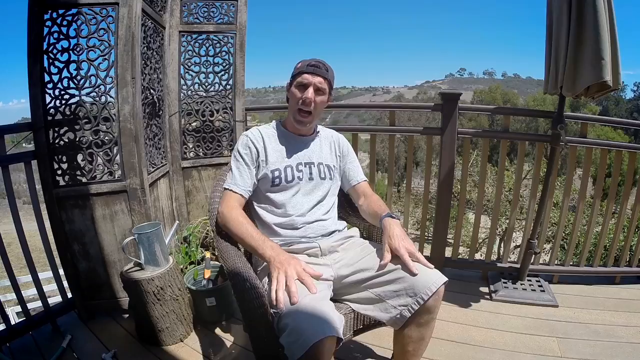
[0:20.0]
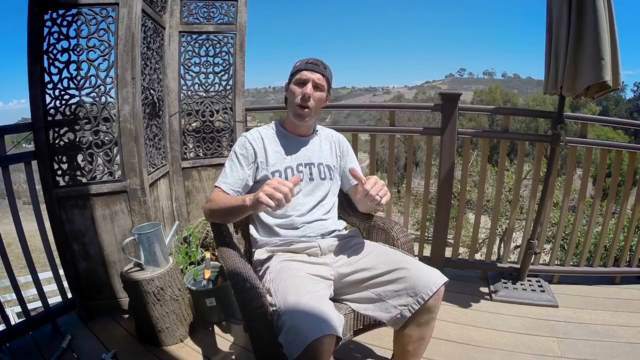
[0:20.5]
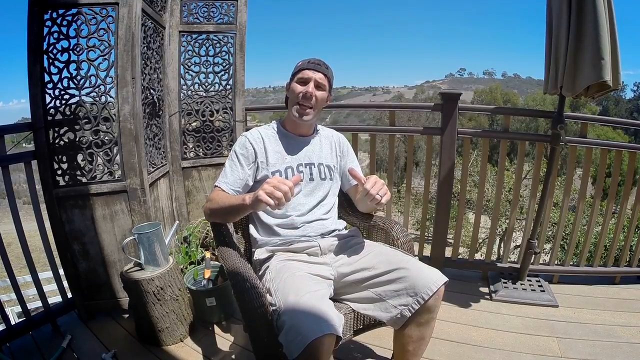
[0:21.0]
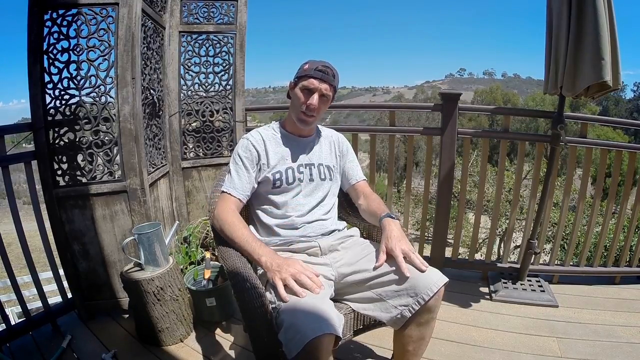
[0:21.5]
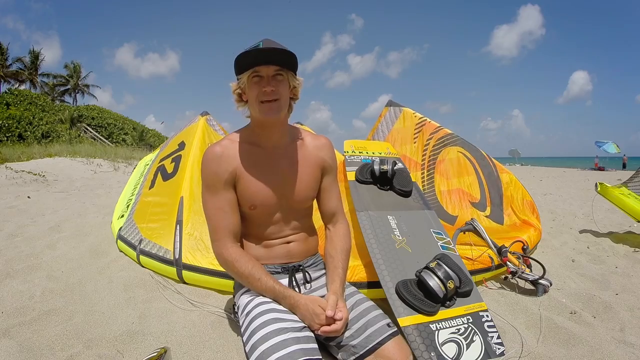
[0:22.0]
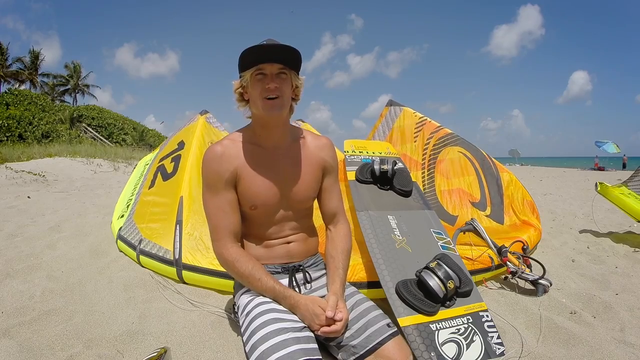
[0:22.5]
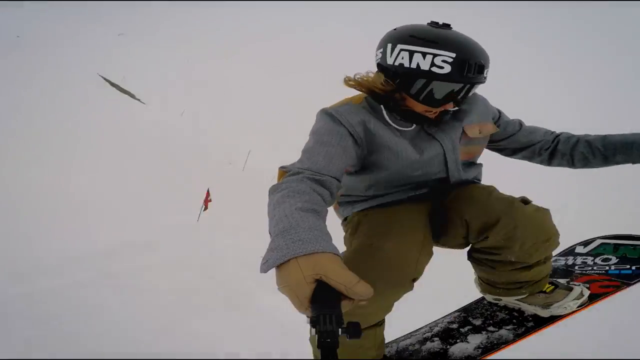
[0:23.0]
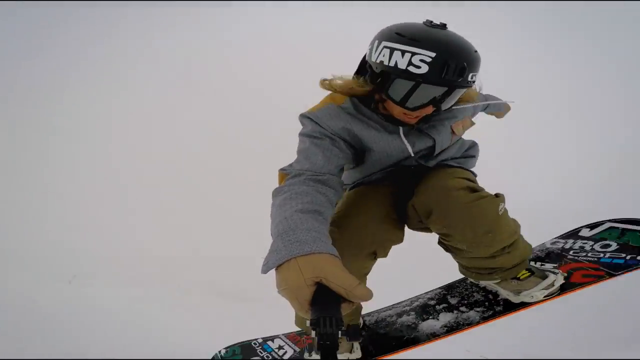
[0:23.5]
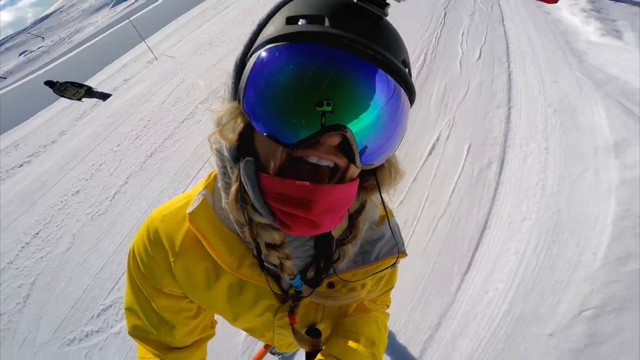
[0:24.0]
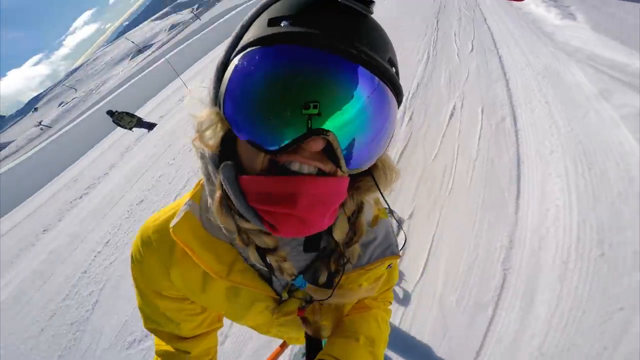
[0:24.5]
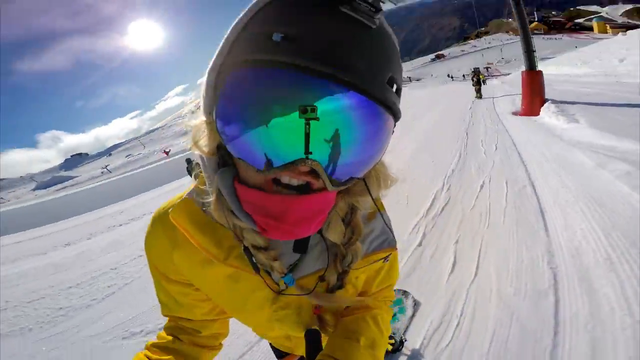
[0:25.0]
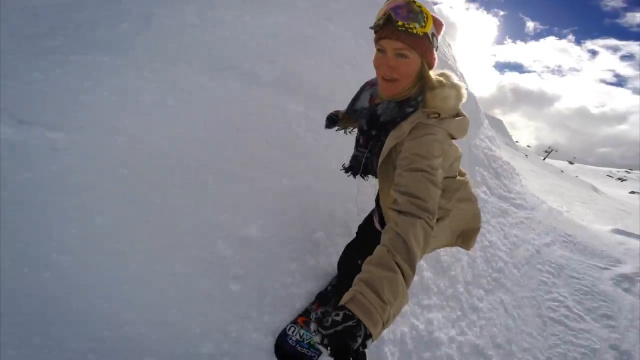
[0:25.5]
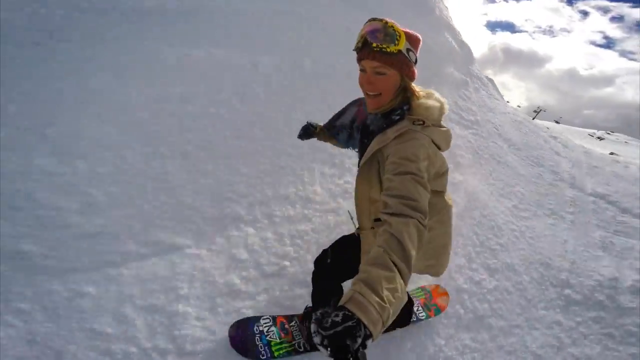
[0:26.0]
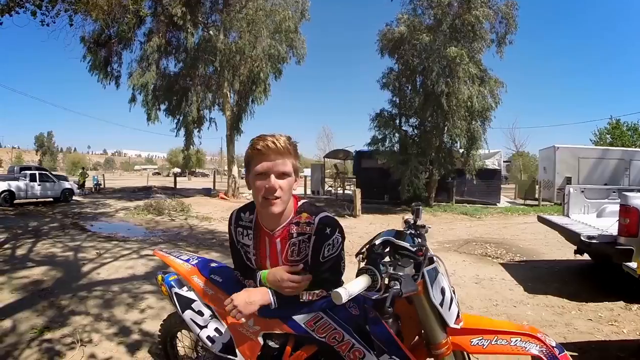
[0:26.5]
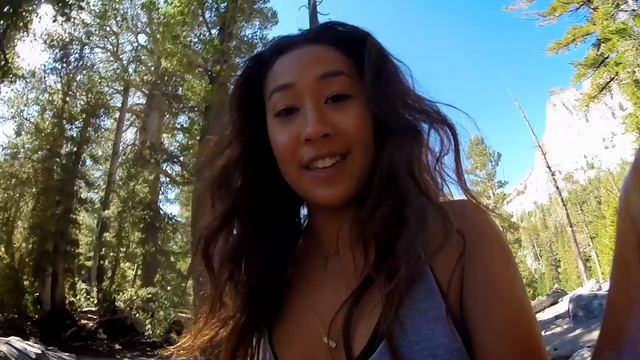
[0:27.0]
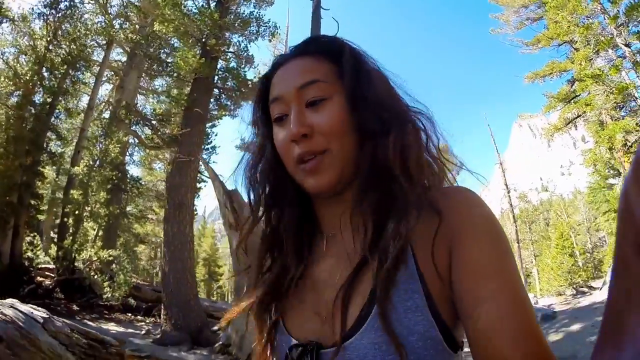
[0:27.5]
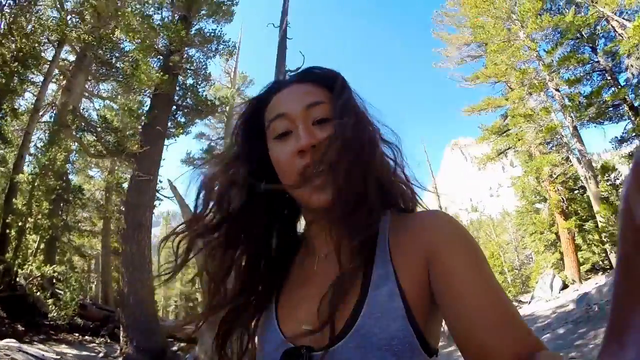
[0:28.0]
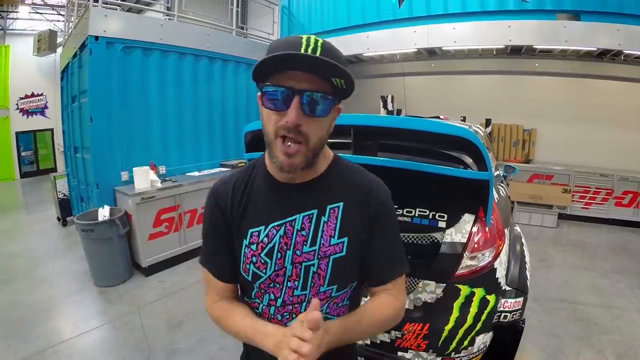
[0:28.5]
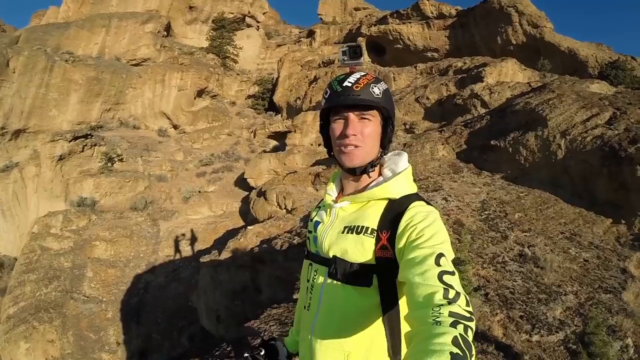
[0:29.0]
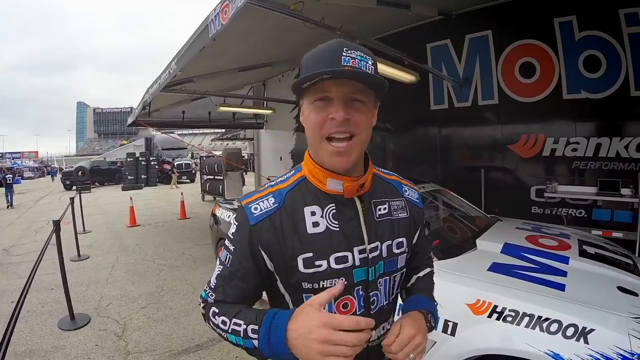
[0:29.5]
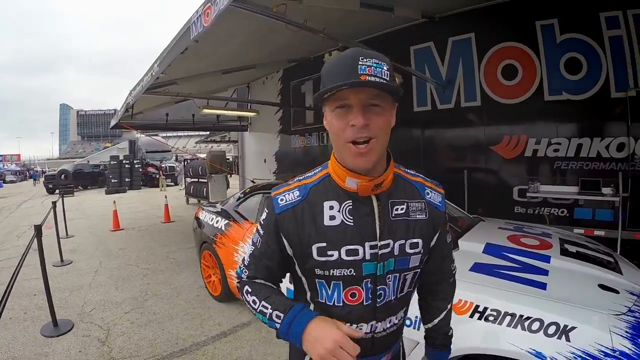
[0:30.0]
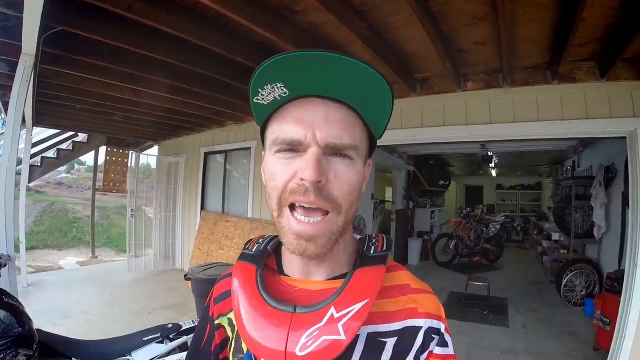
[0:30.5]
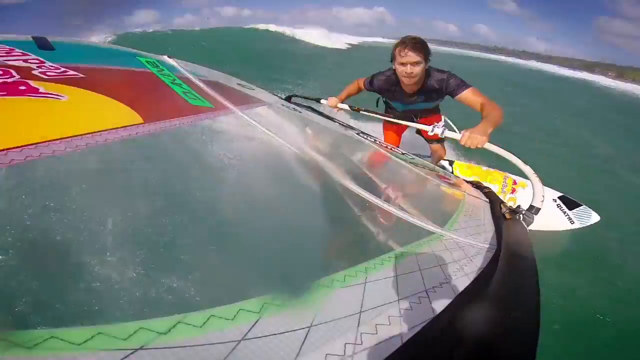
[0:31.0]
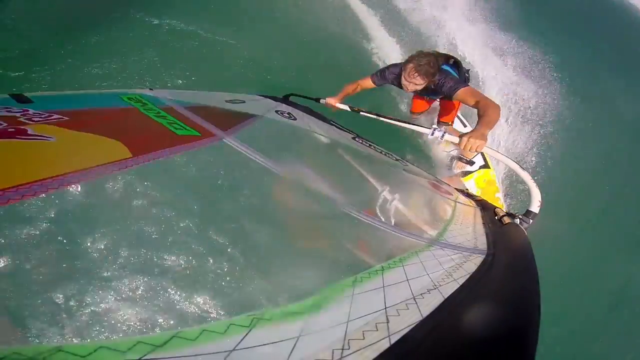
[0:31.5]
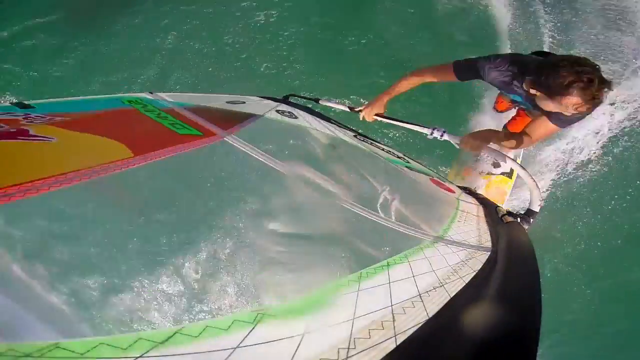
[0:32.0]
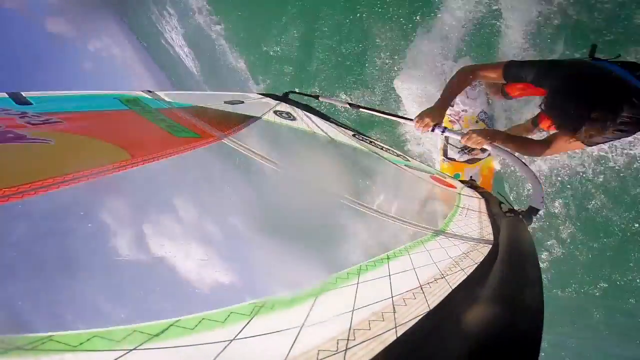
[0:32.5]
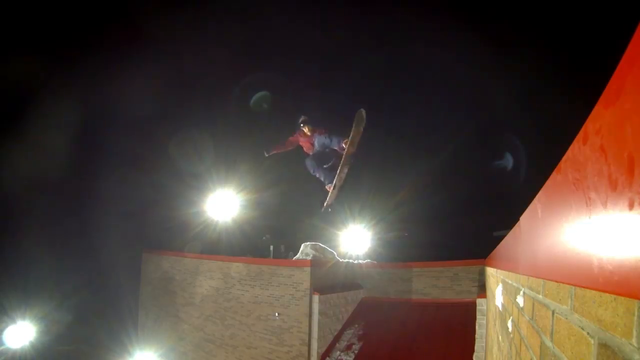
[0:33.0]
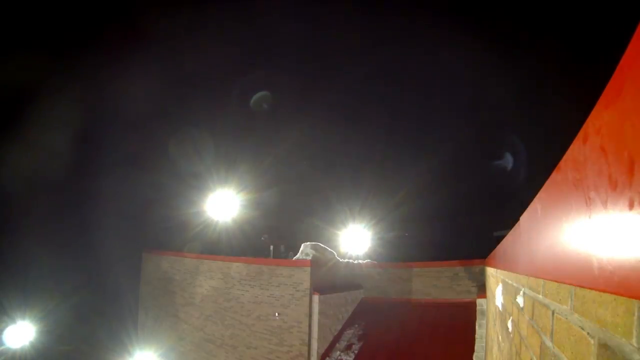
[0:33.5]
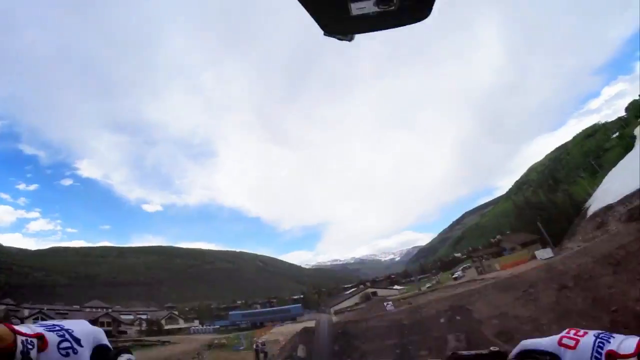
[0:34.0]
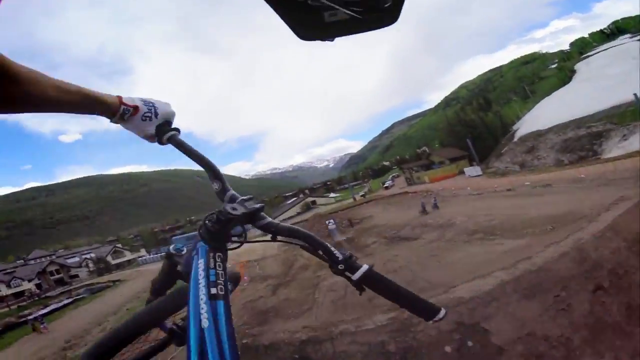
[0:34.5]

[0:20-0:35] Apparently a compilation of people talking about using this GoPro begins. First there is a guy in a reversed hat wearing a gray Boston shirt. Another guy is camping on the beach, and he is apparently doing a water sport in which a boat drags him as he glides on a board. Another person is snowboarding while holding a selfie stick with the GoPro, and a woman is also snowboarding with a selfie stick. The same girl camping appears. There seems to be a guy on a motorcycle and a guy in a race car. The skydiver in the neon jacket is shown getting ready to skydive. A bunch of pro racers appear, followed by the guy surfing on the beach and a professional skateboarder. Then there is a POV shot of the dirt biker.